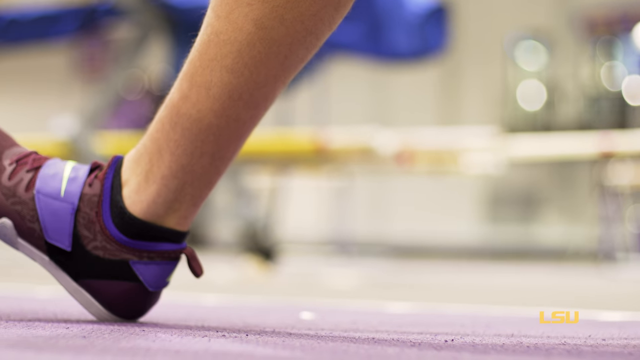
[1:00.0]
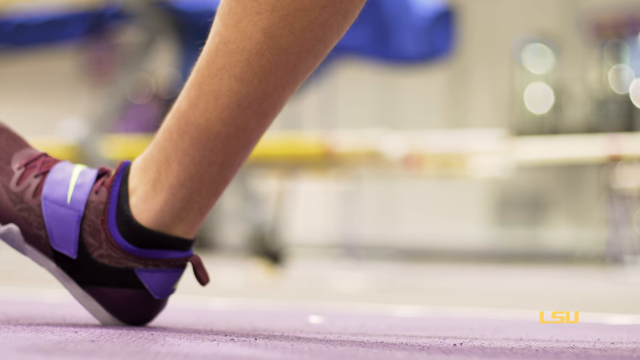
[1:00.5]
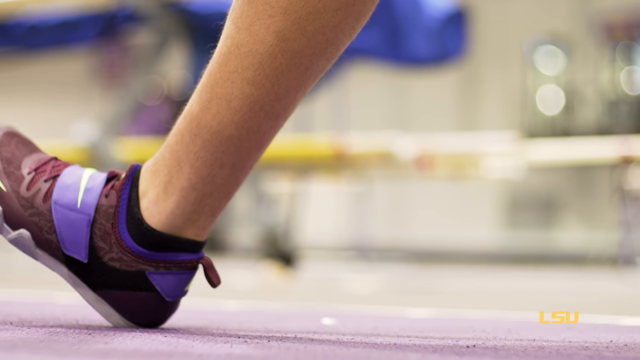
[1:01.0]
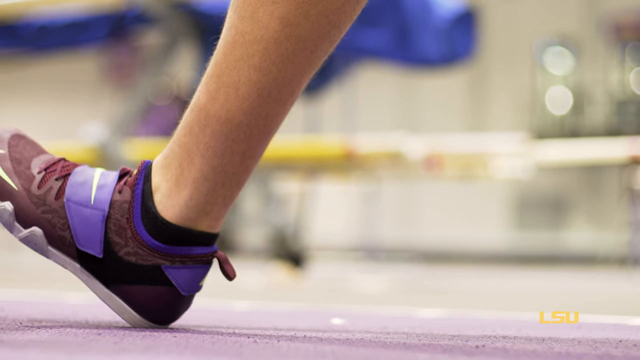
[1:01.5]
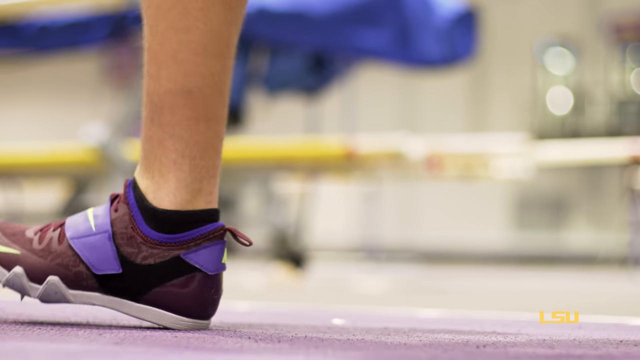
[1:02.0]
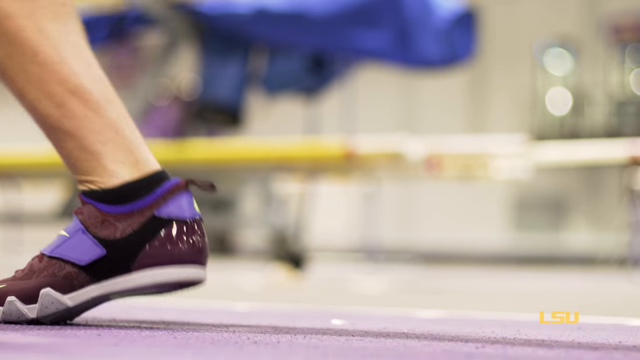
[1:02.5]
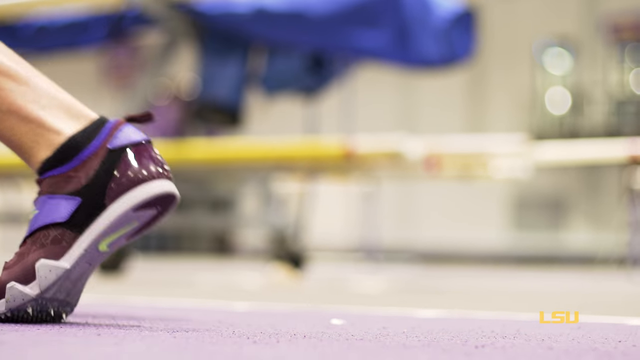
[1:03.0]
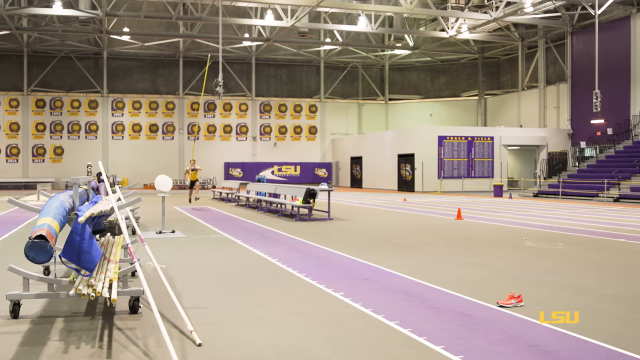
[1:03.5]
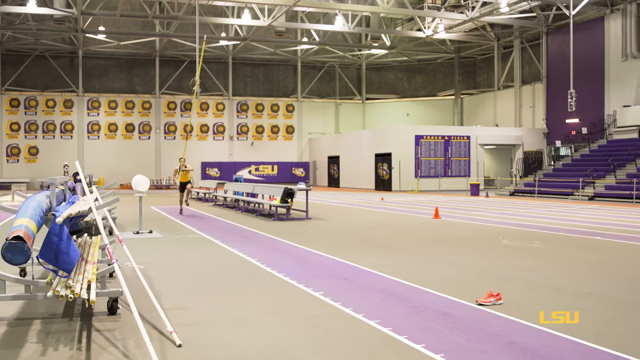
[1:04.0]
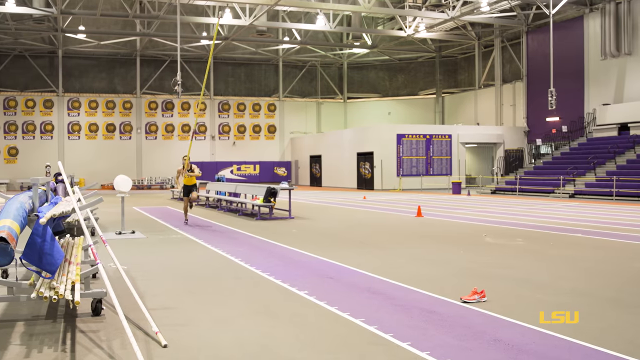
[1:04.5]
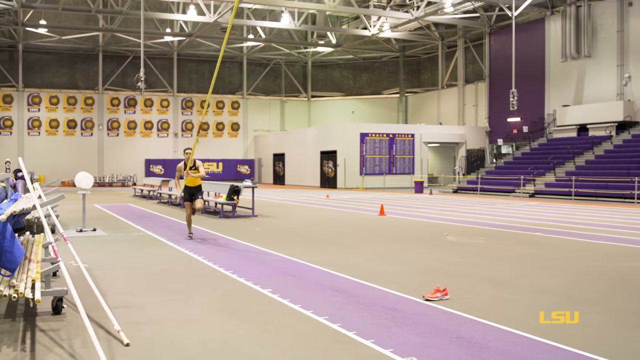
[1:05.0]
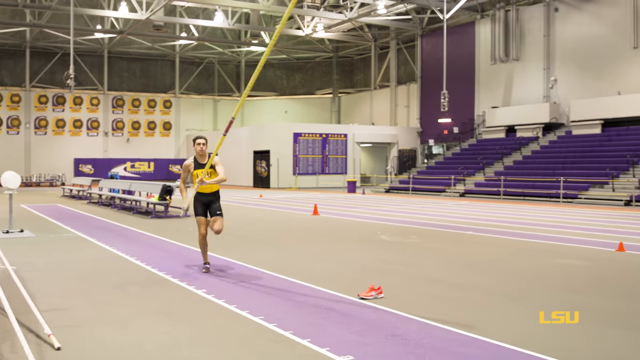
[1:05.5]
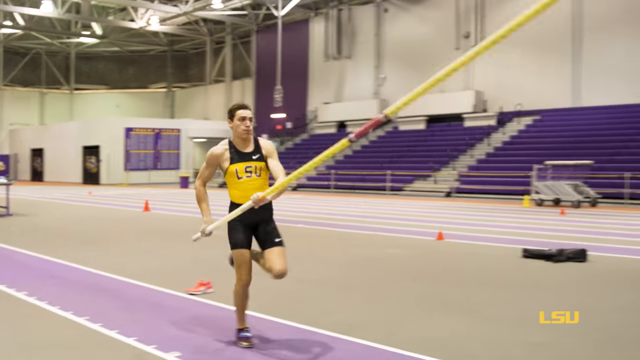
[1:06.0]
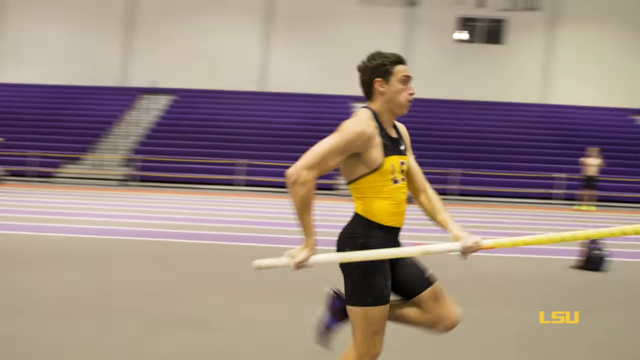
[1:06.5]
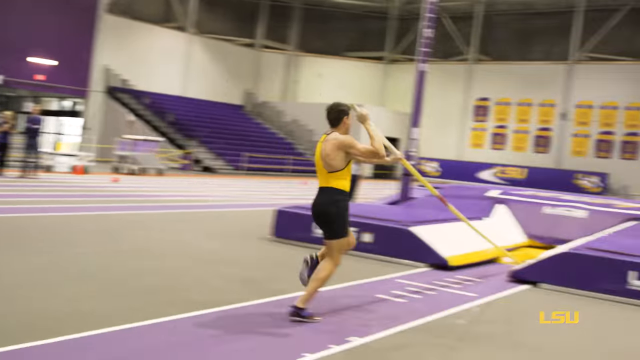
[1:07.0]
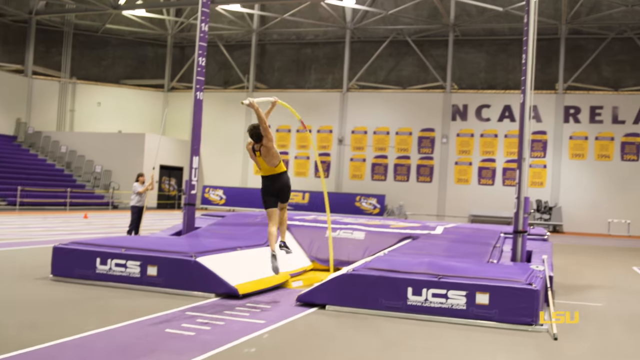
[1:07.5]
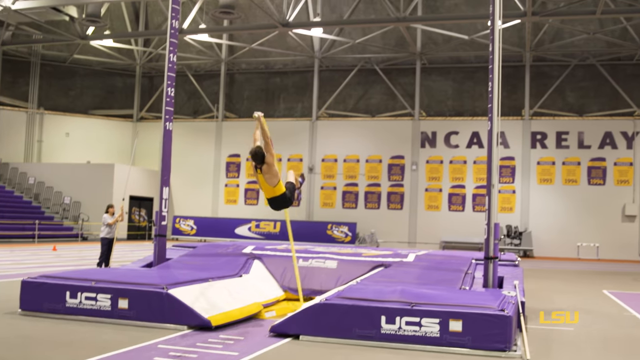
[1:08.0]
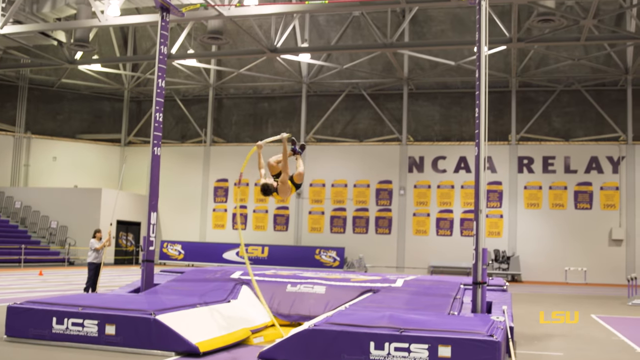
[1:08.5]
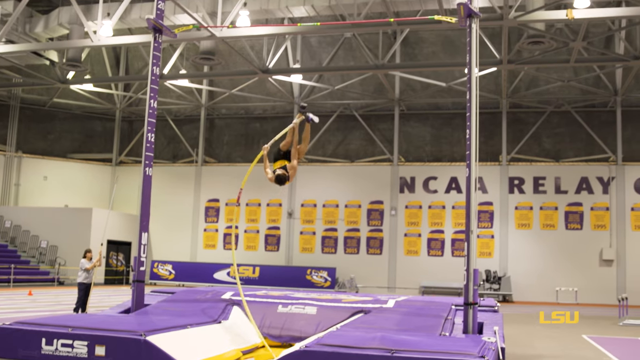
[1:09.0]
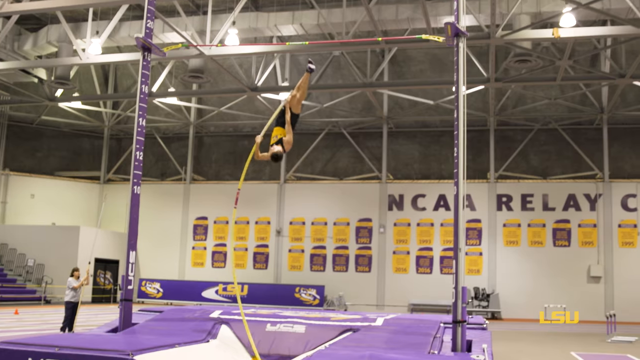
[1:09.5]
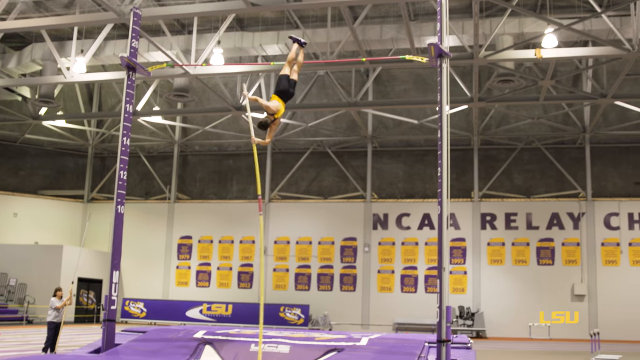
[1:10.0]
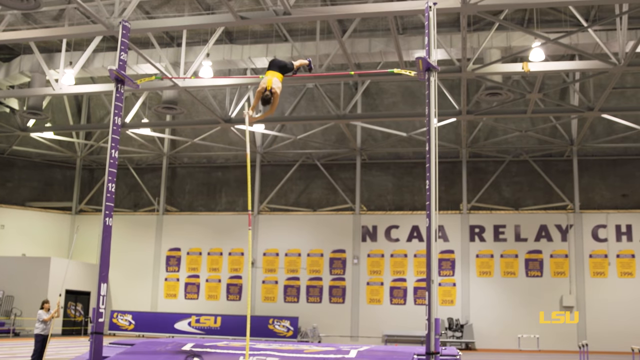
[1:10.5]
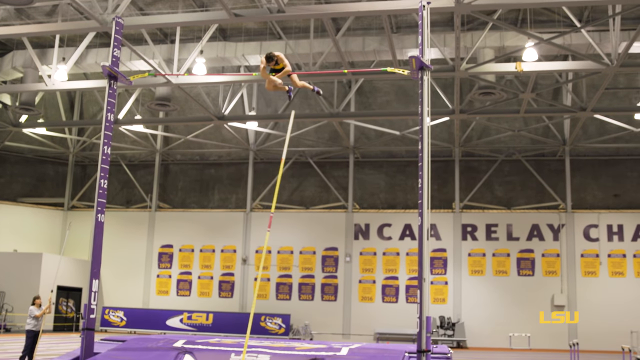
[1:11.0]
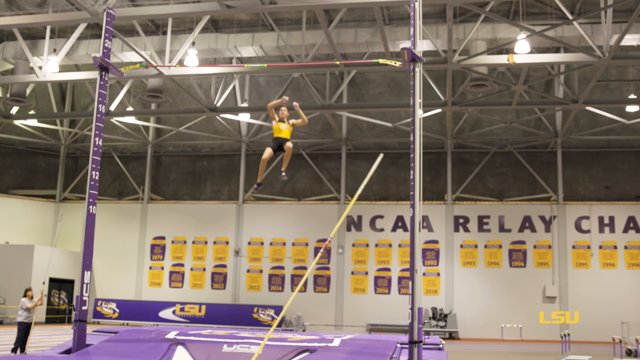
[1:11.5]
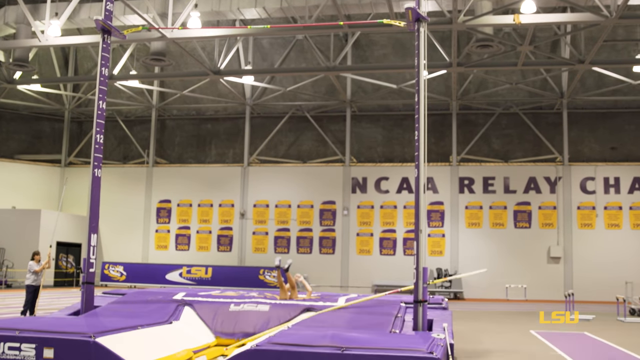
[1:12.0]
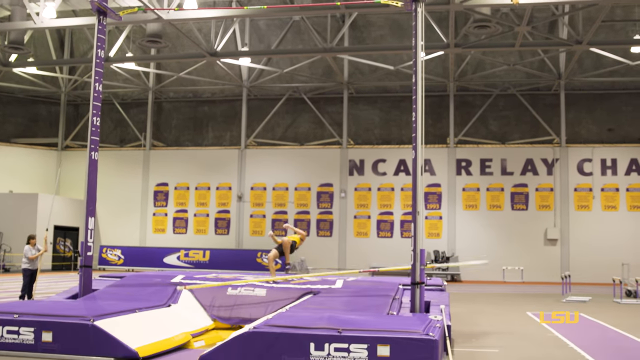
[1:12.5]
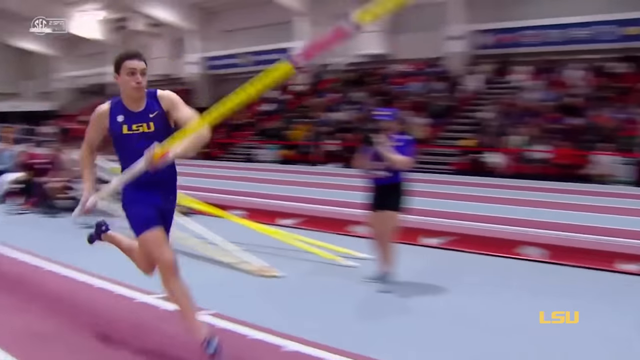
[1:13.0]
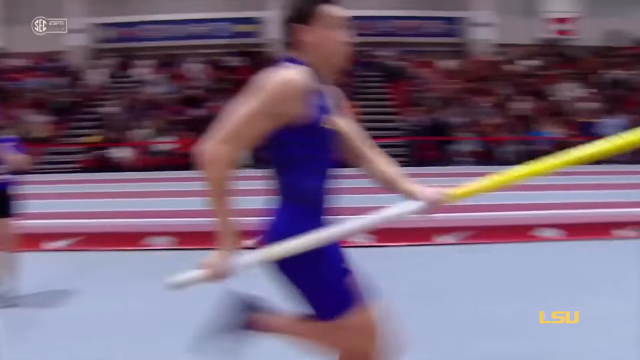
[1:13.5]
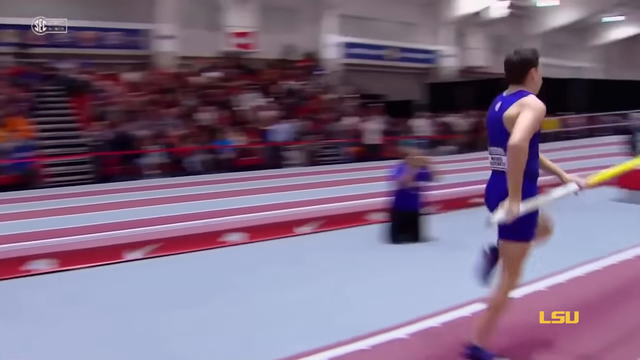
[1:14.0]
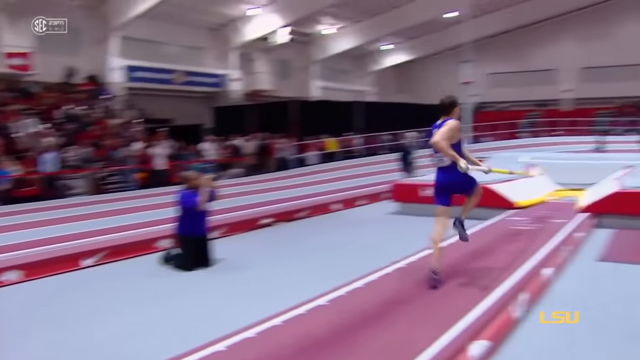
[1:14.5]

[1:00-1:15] A close-up shows the runner's leg and his shoe, which looks to be a Nike shoe with laces, in a purple and burgundy-type color. The vaulter runs rapidly while carrying the pole, sticks it into the bottom, and pushes himself up and over the bar. Another highlight of a previous vault follows: at the very last second he wears a purple and blue leotard as he hops over. The last few frames show that he was in a tournament or competition of some sort, with a crowd watching, judges in the background, and someone filming in the background. In the practice footage there is no one else there besides one person, probably the school's trainer.